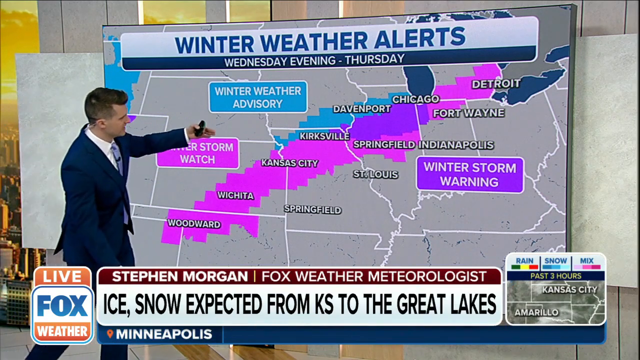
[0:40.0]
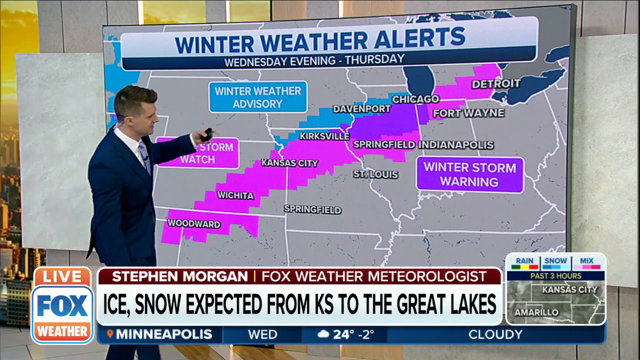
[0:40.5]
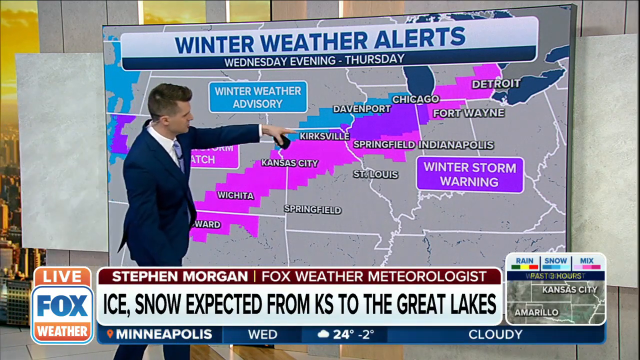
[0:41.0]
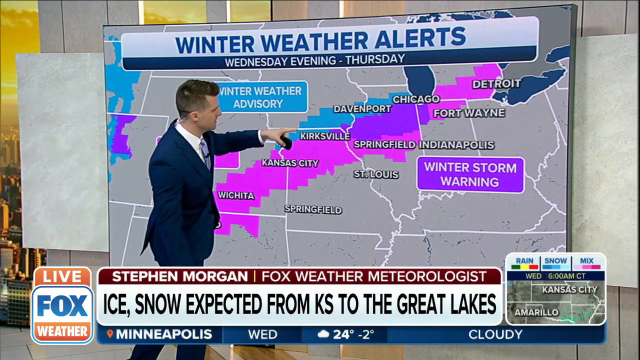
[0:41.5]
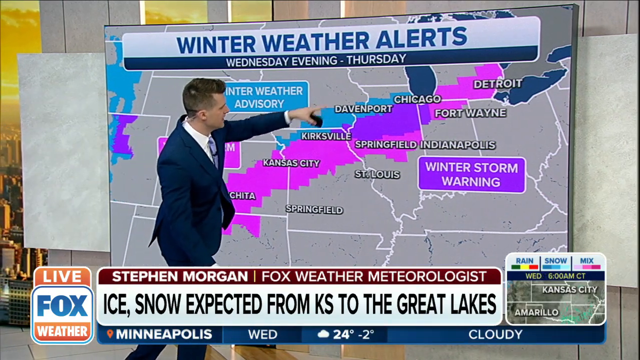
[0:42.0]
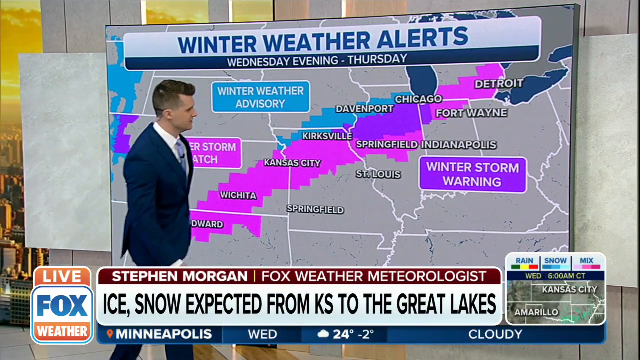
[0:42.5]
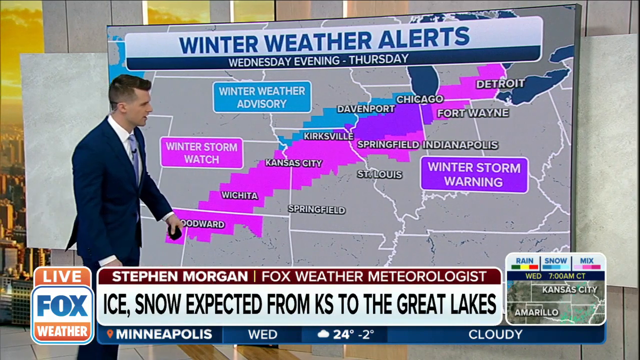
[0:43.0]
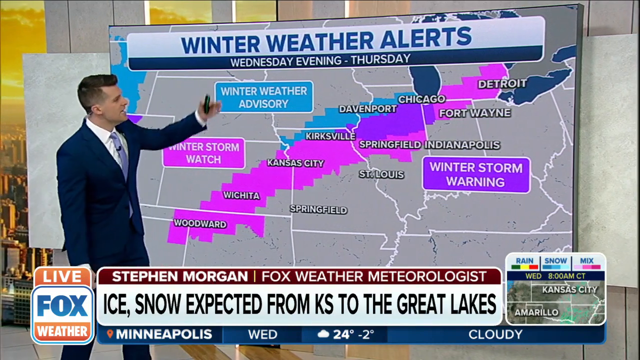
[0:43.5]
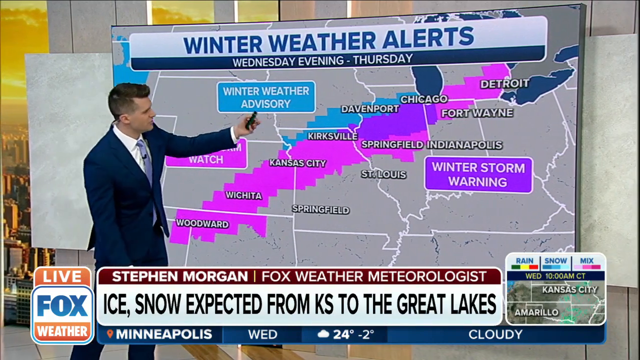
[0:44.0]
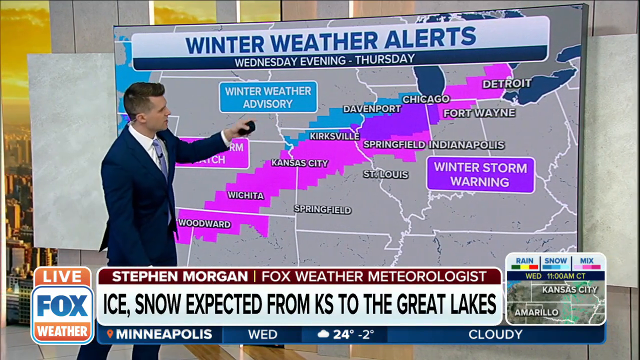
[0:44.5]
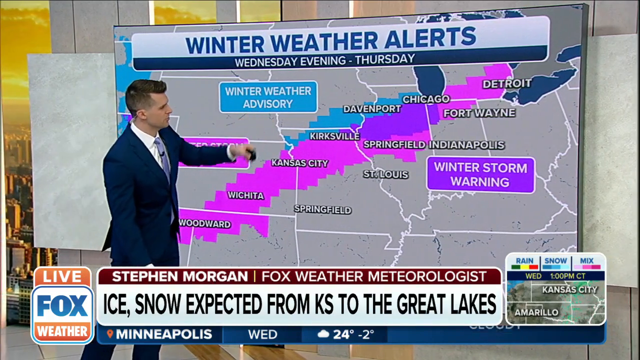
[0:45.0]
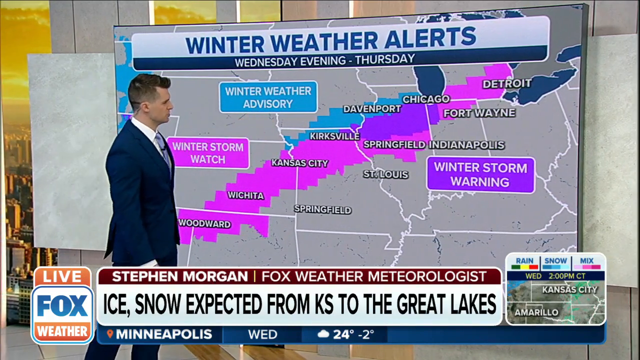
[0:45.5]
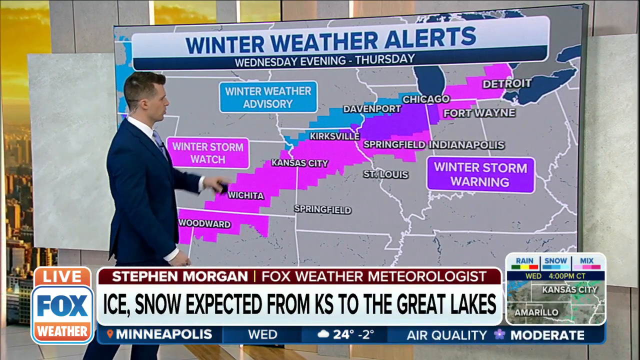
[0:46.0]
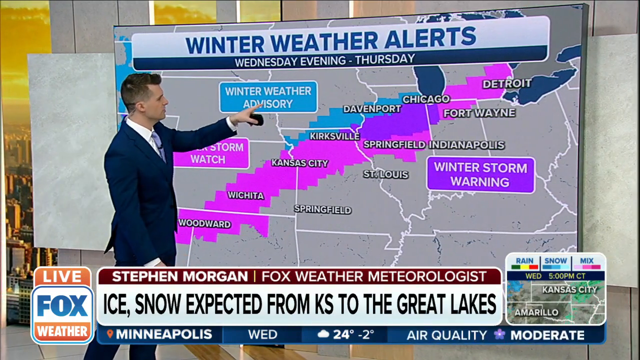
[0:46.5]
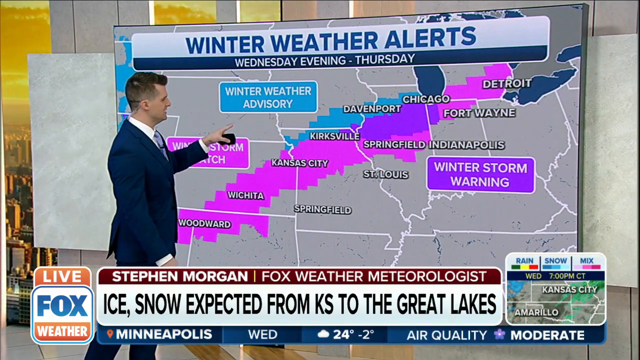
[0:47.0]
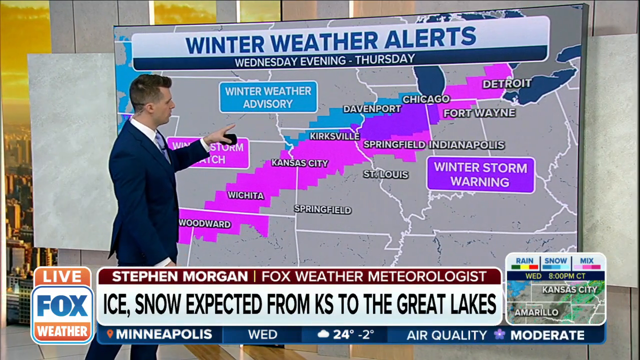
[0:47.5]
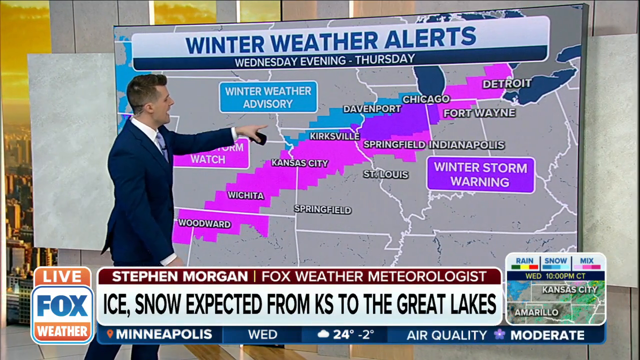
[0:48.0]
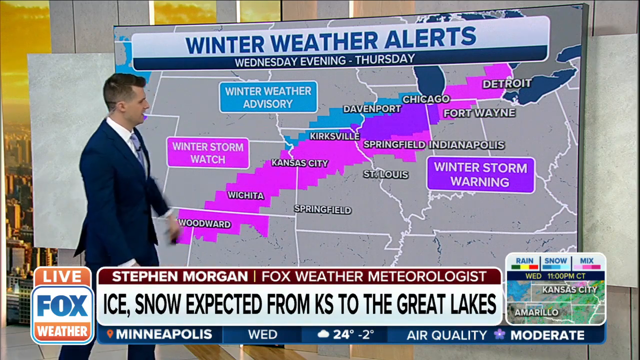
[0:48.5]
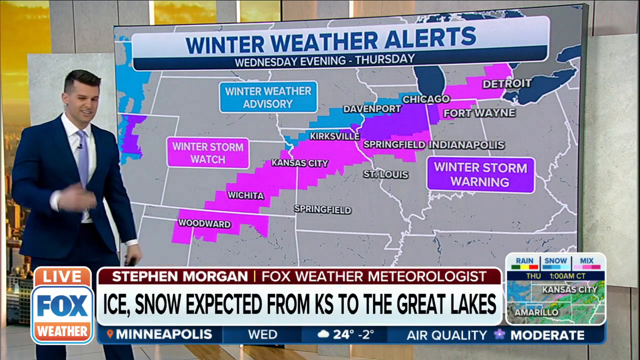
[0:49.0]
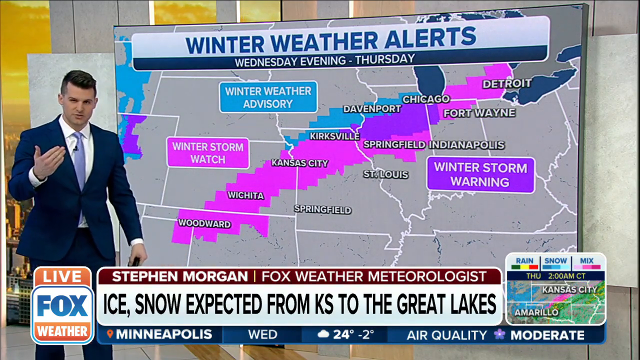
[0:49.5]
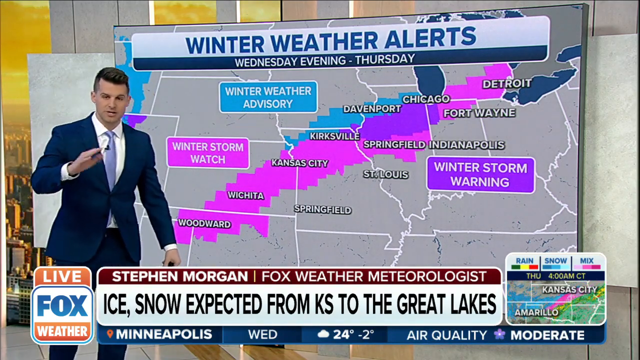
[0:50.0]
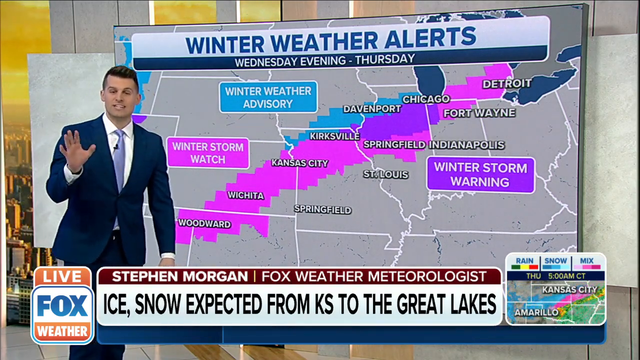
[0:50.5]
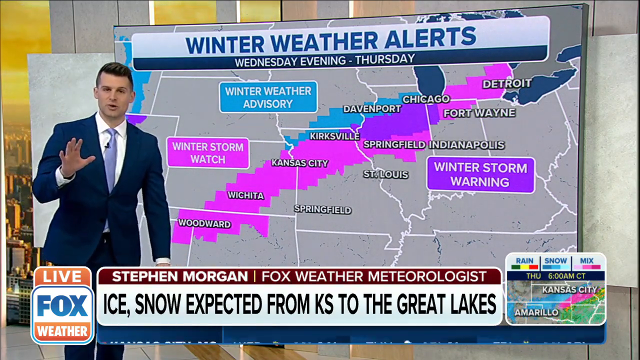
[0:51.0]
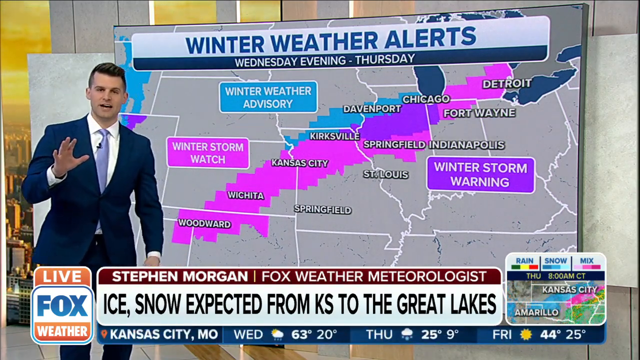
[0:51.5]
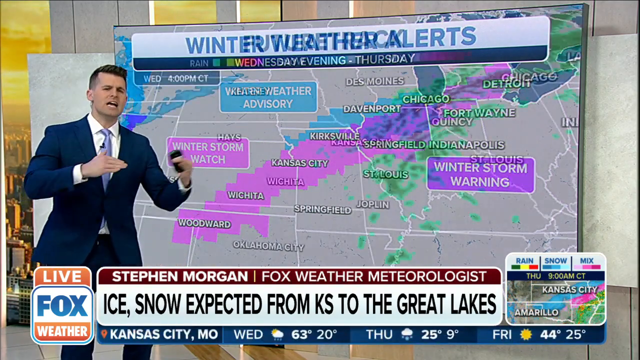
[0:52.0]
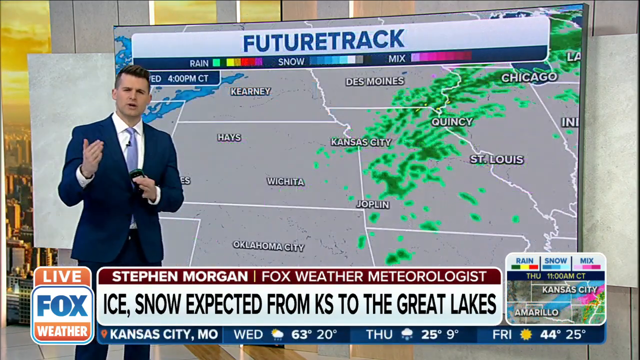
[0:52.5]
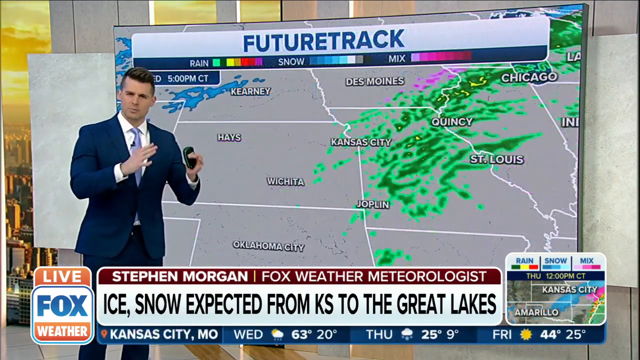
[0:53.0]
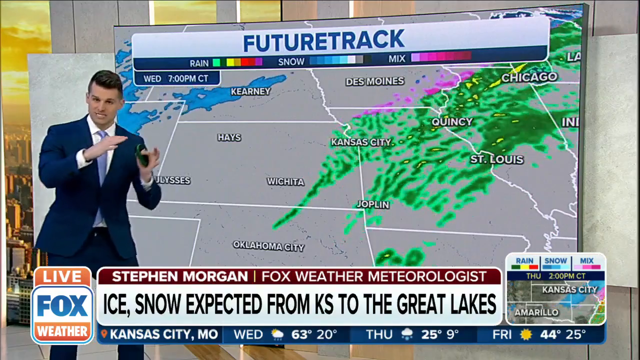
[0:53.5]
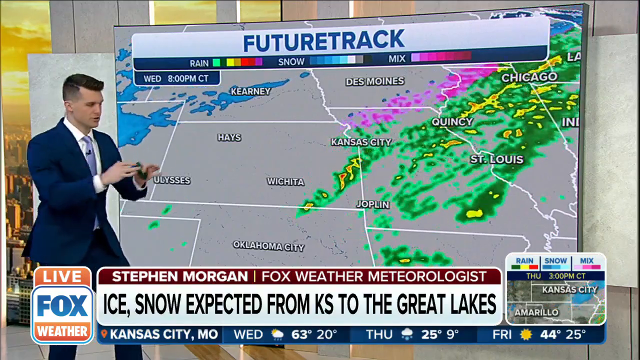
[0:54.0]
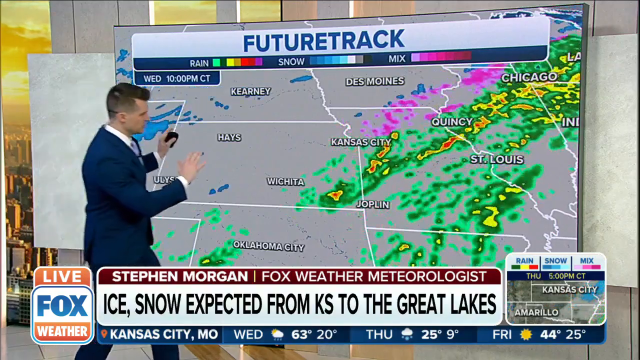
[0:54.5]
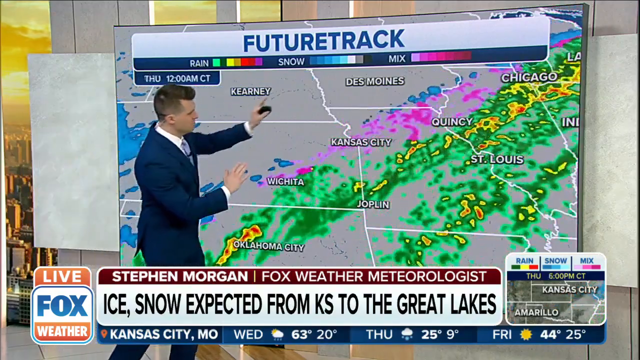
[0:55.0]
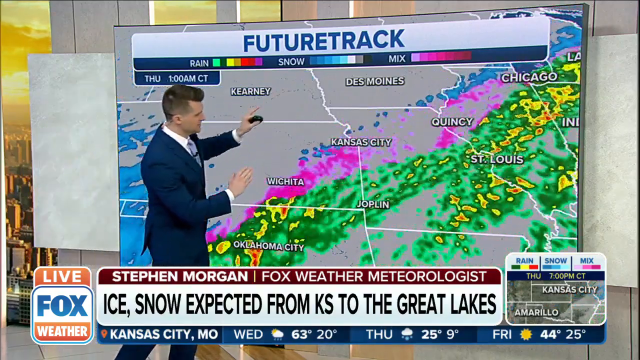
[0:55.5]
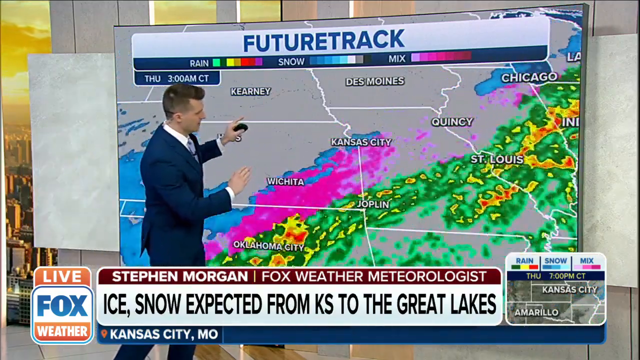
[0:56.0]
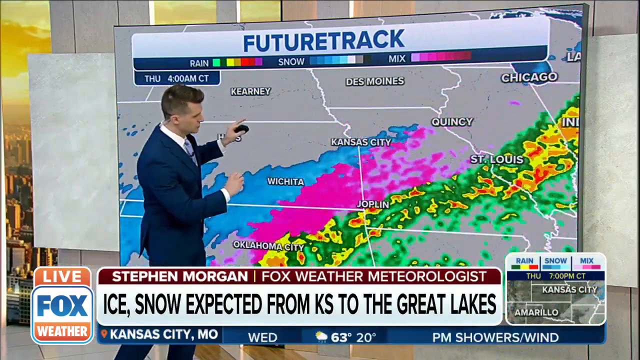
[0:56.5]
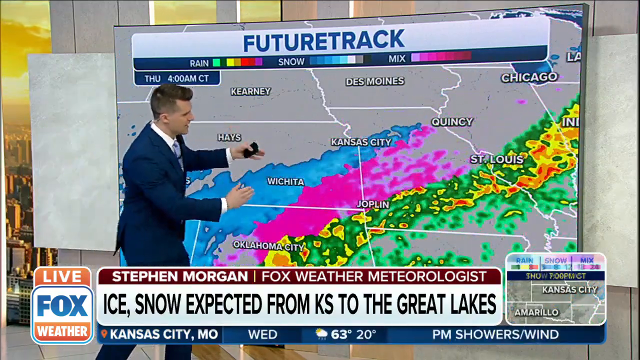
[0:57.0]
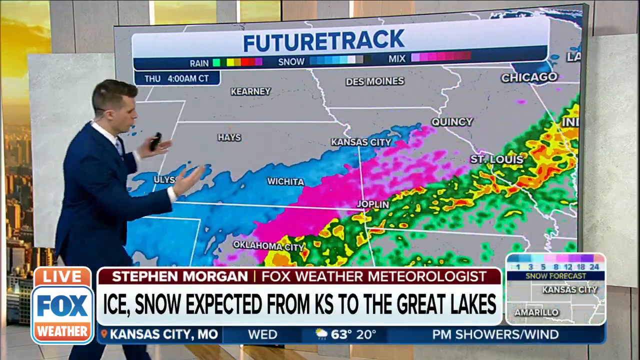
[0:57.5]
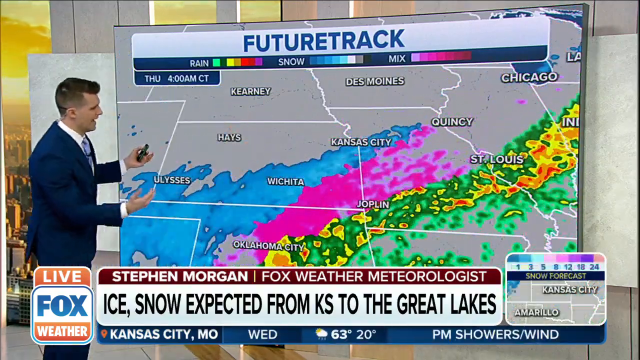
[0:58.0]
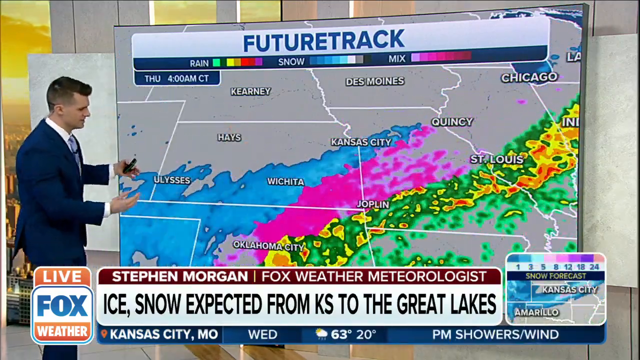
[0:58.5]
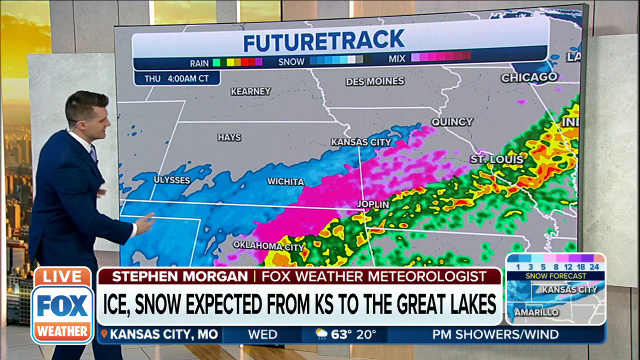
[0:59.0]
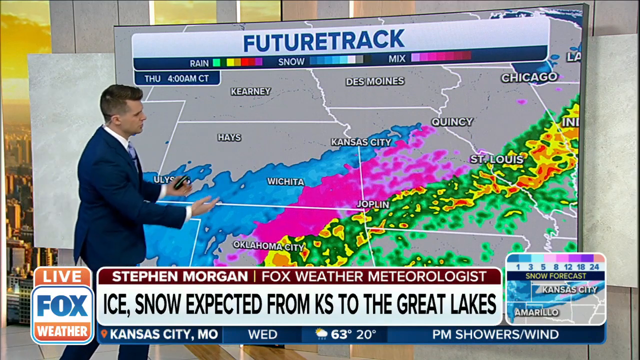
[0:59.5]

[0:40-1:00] The view focuses on the meteorologist standing at the board. With his left hand he circles over the state of Nebraska, apparently just north of Kansas City, and holds his hand out as he points. The board then shows a future track of expected rain, with the text "Wednesday at 10 p.m. Central Standard Time." Rain stretches from Wichita, Kansas, through Kansas City, Missouri, and eastward through Indiana into Ohio, across much of the Midwest. The map then changes to show blue and pink areas indicating snow mixed with rain across Kansas from west to east, from Ulysses through Wichita and up to Kansas City, a wintry mix of precipitation.